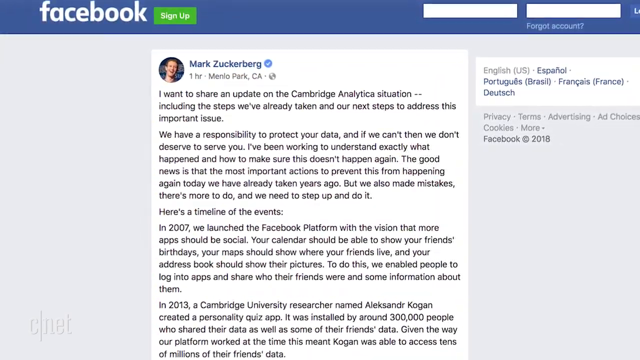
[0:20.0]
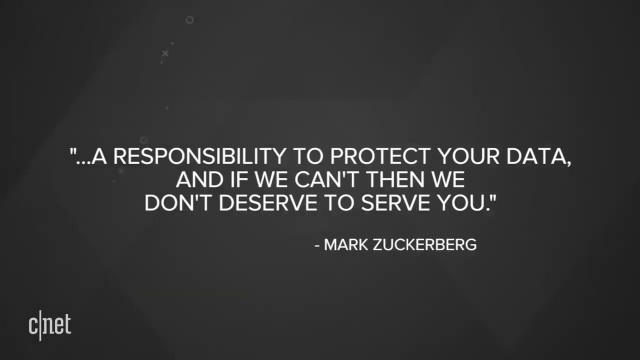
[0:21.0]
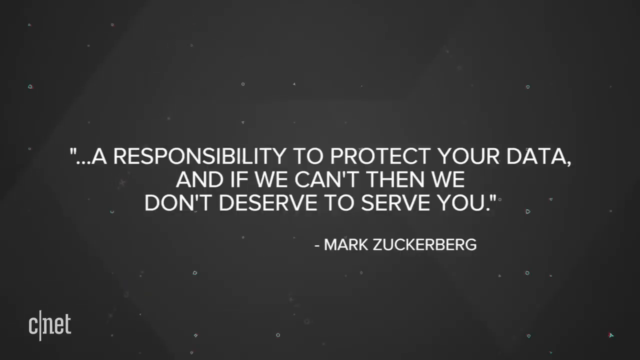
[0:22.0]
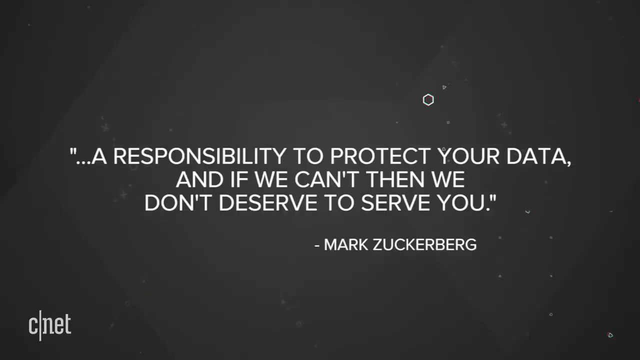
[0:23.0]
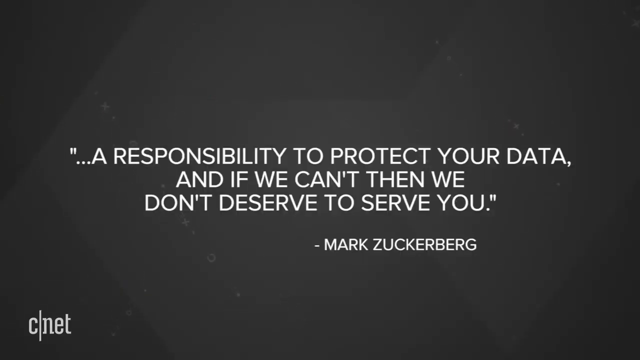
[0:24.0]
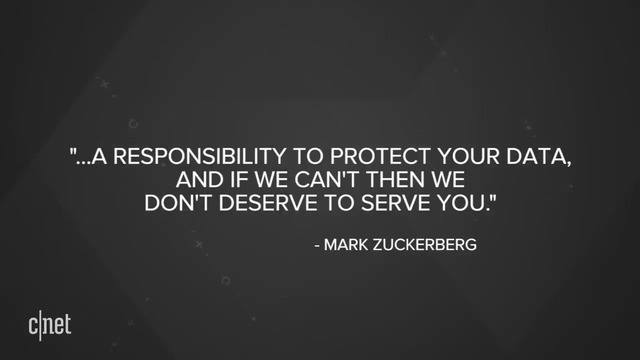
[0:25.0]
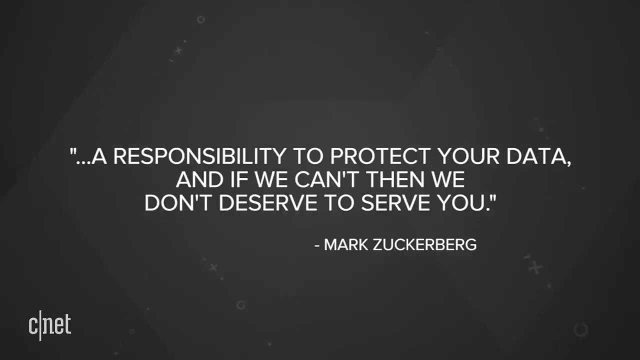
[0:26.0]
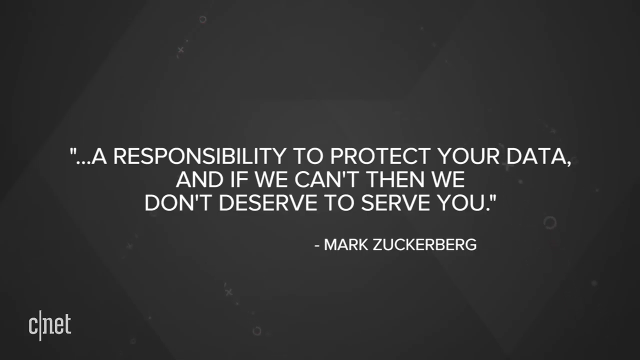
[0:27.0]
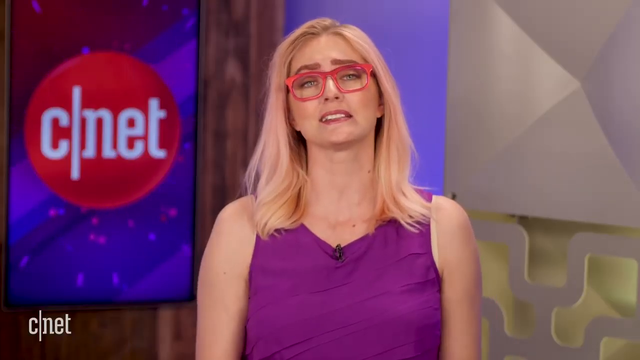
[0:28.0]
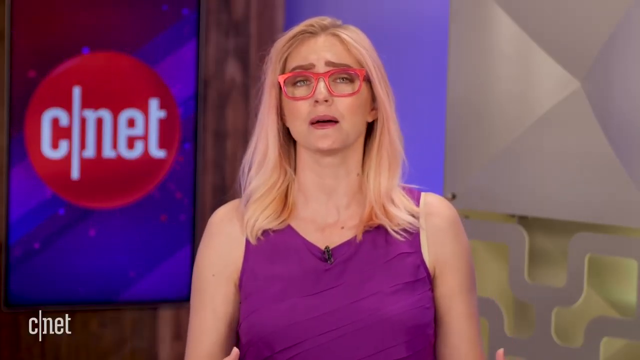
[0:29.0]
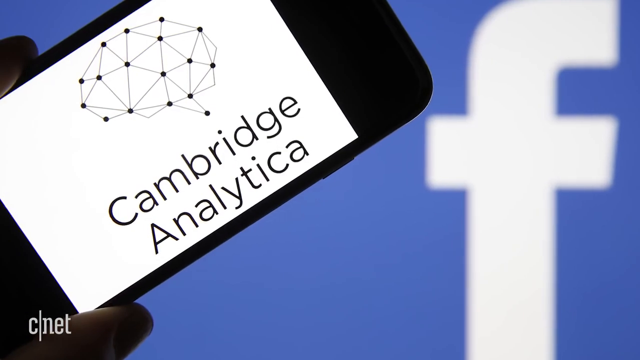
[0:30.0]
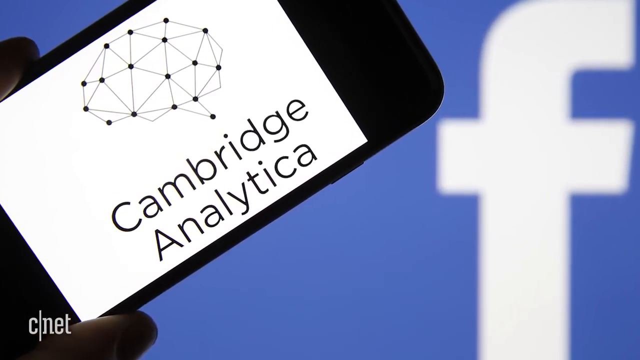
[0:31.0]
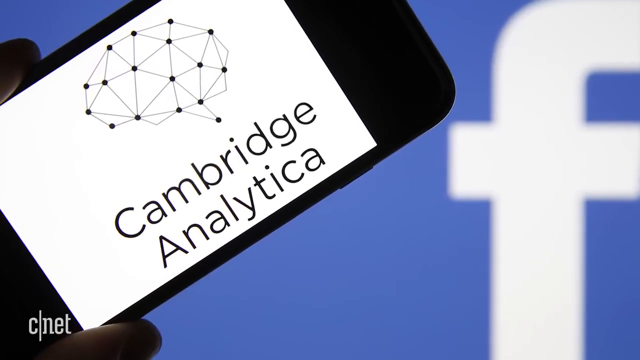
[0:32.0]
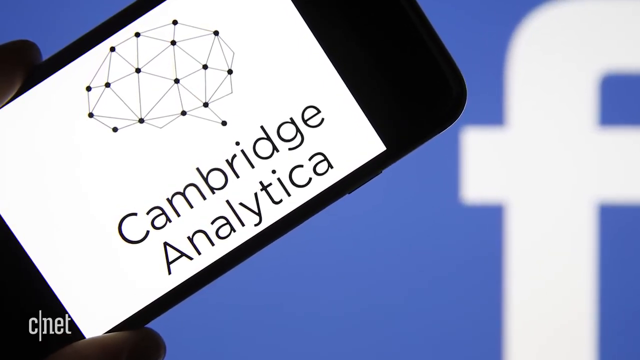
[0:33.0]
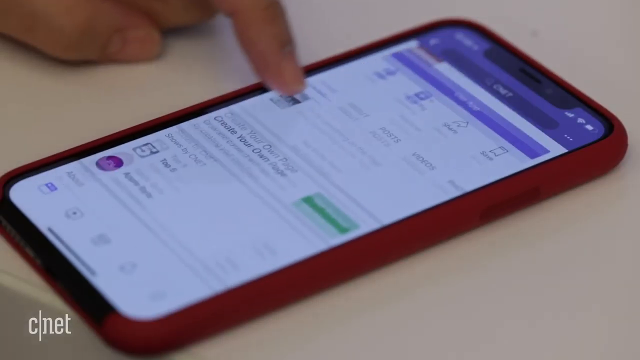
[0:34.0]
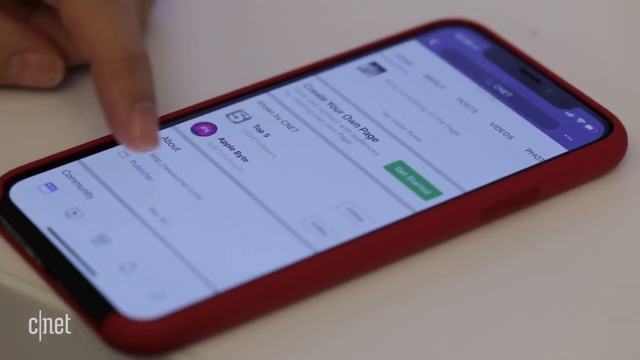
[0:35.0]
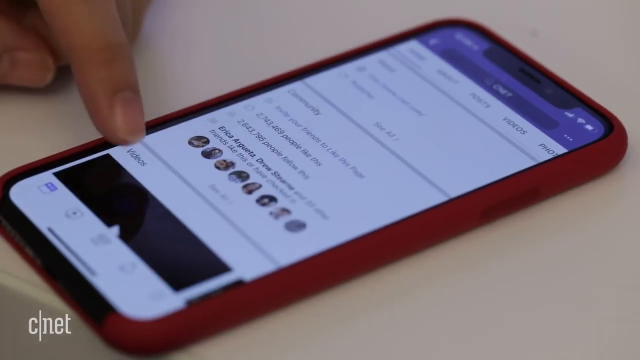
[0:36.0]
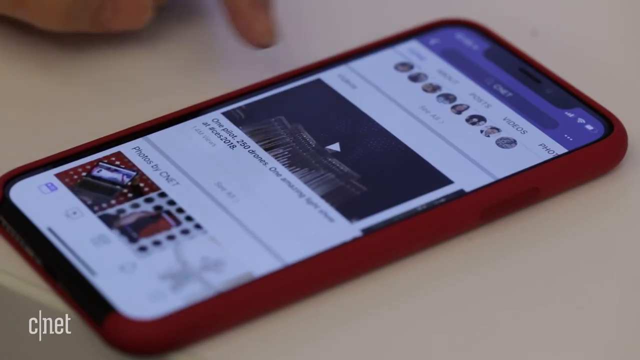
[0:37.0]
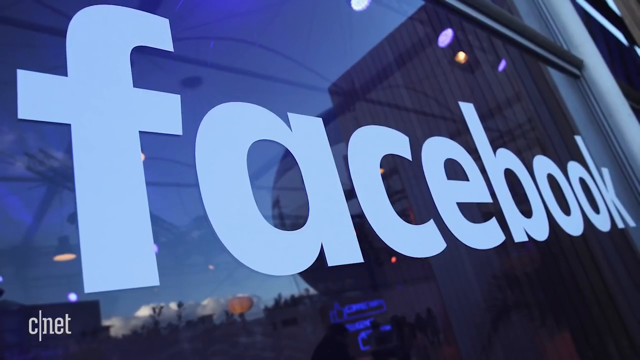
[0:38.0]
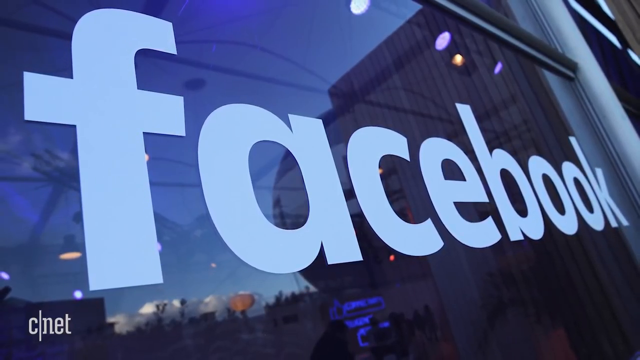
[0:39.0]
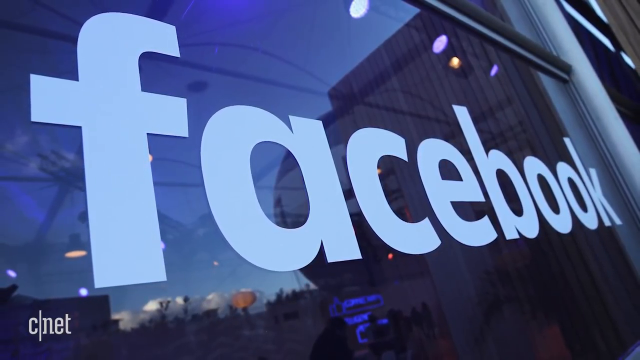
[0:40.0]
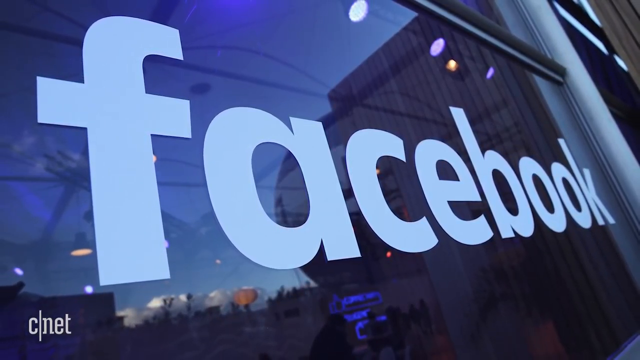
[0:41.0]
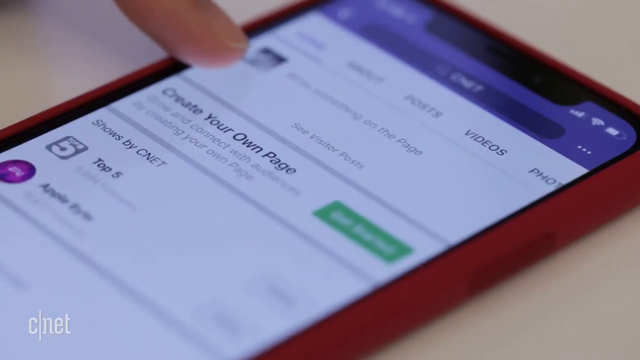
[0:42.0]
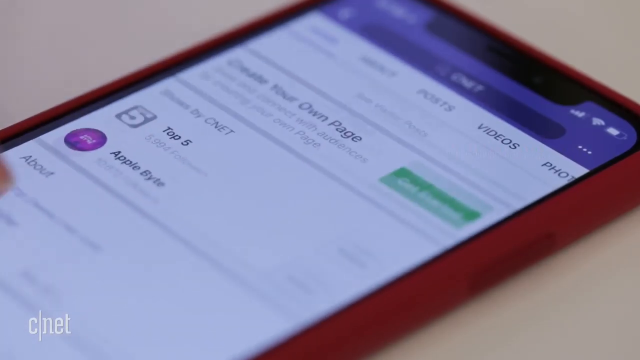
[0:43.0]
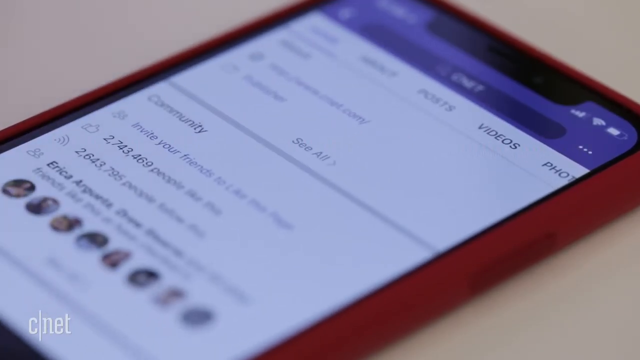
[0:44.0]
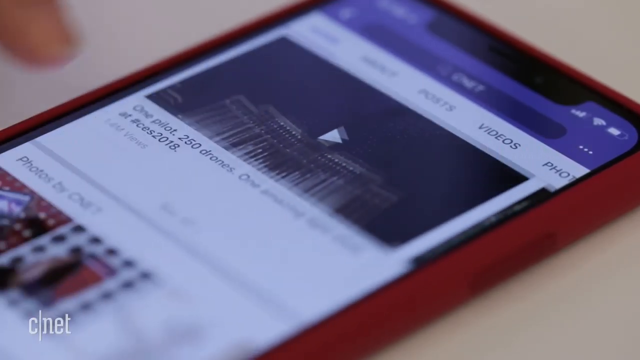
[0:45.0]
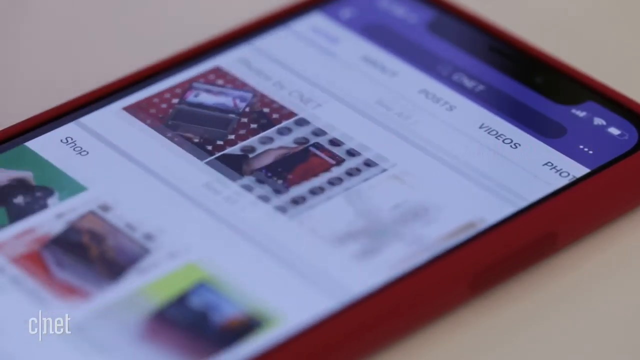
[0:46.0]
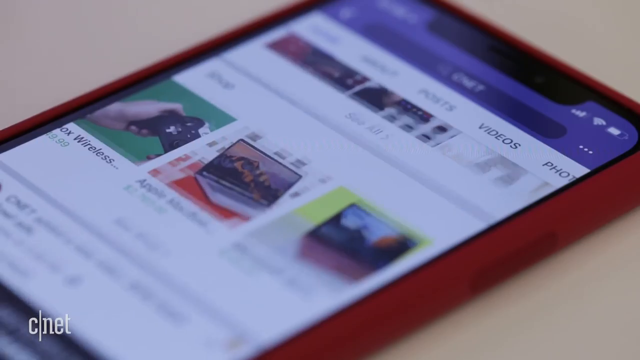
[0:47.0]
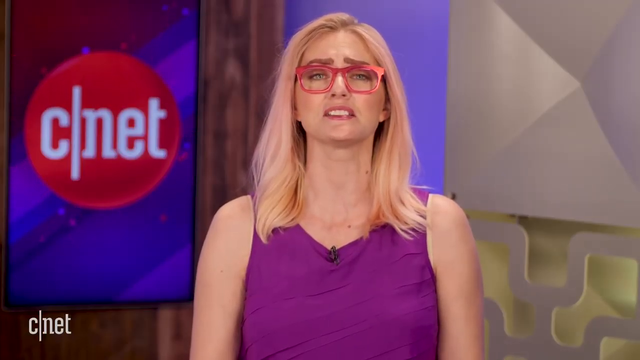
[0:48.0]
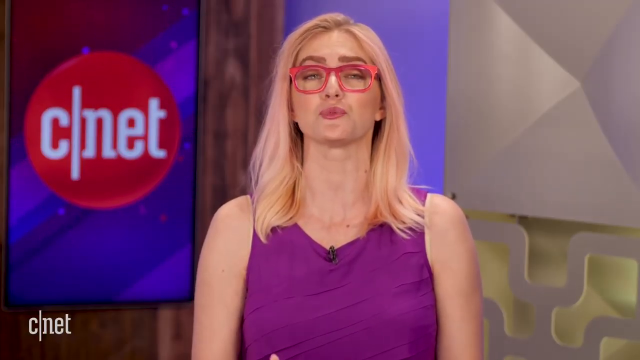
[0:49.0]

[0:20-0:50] Against a black background, text reads "We have a responsibility to protect your data and if we can't, then we don't deserve to serve you." The video switches to the blonde woman, then to a phone showing "Cambridge Analytica," then to someone scrolling through a phone, a red book, and a picture of a window with "Facebook" on it in white letters. Someone scrolls through a phone again, this time up close, before the woman in the purple dress appears once more. The video then cuts immediately to post text reading "In 2007, we launched the Facebook platform with the vision that more apps should be social. Your calendar should be able to show your friend's birthdays. Your maps should show where your friends live and your address book should show their pictures. To do this, we enabled people to log into apps and share who their friends were and some information." More text reads "I've been working to understand exactly what happened and how to make sure this doesn't happen again" and "There's more to do and we need to step up and do it."